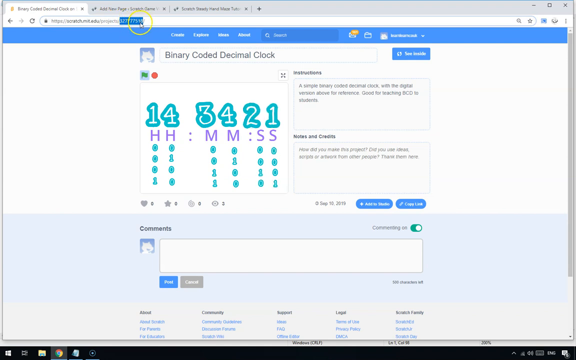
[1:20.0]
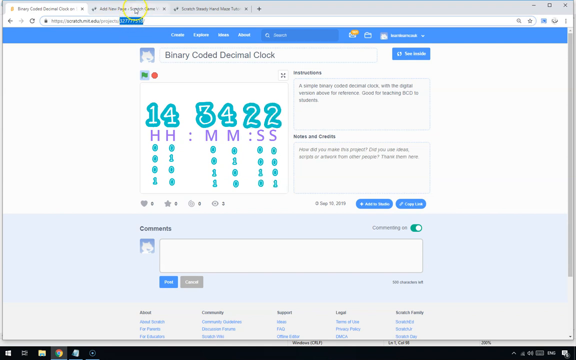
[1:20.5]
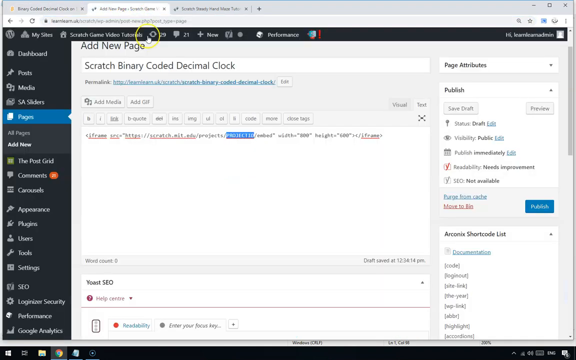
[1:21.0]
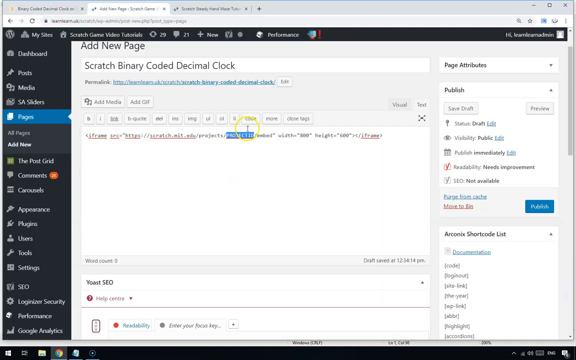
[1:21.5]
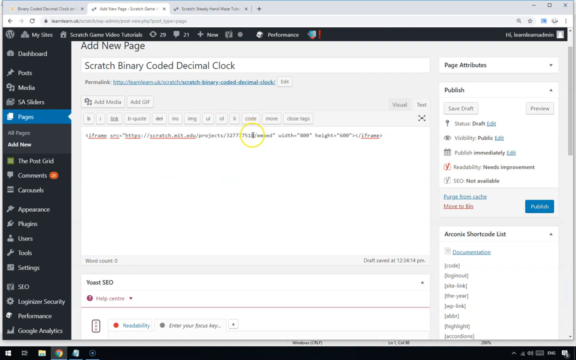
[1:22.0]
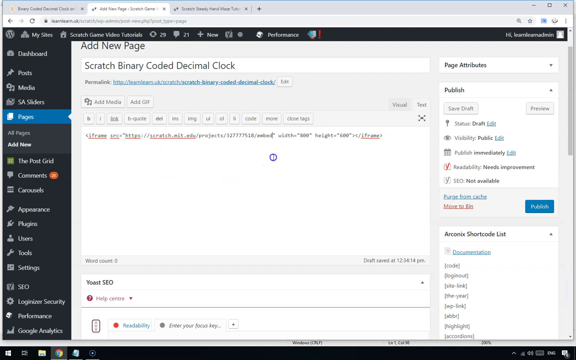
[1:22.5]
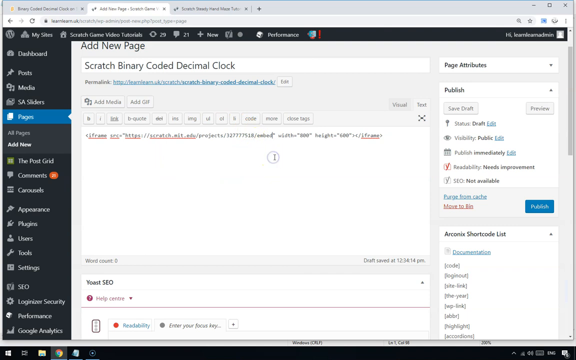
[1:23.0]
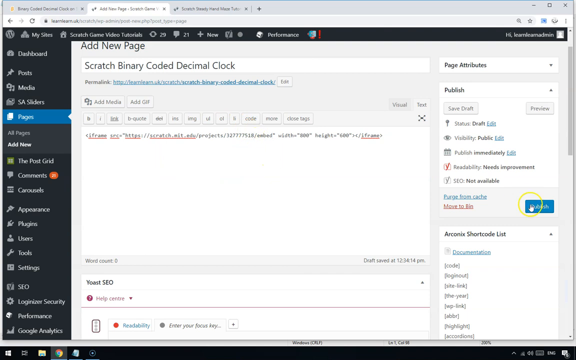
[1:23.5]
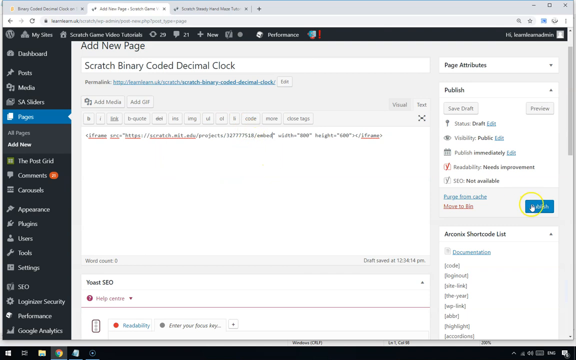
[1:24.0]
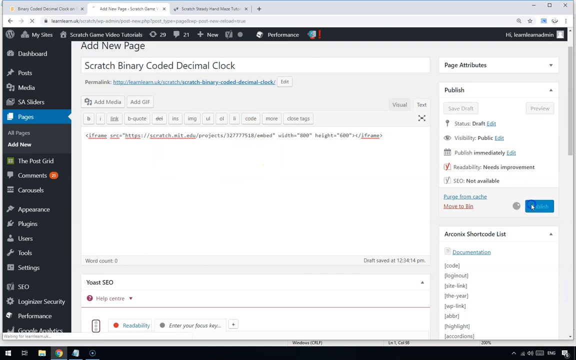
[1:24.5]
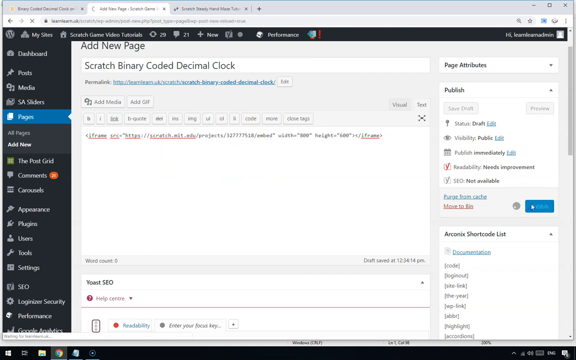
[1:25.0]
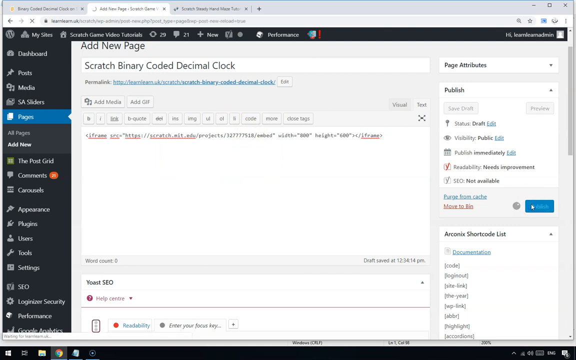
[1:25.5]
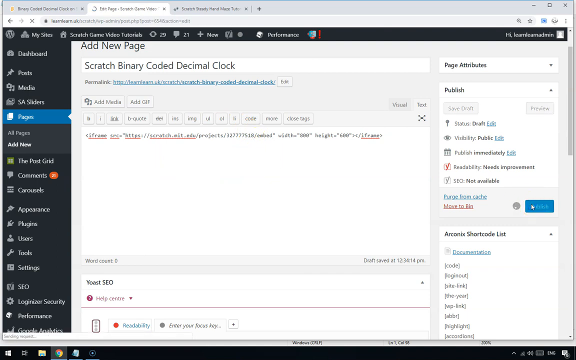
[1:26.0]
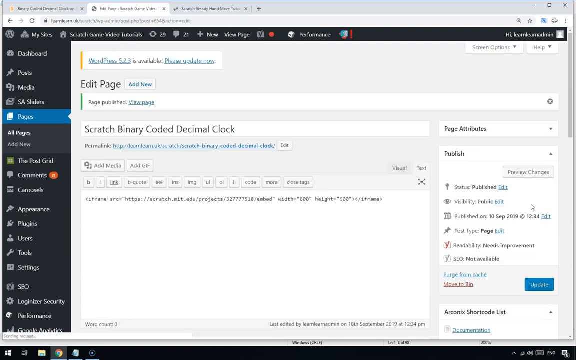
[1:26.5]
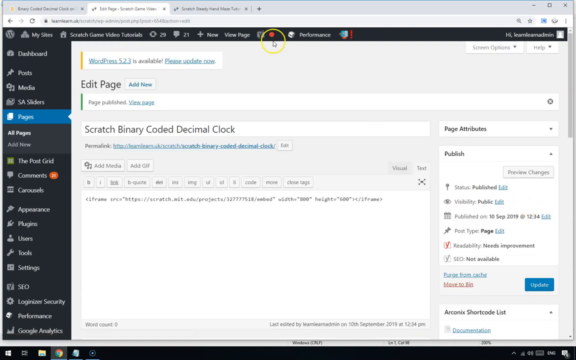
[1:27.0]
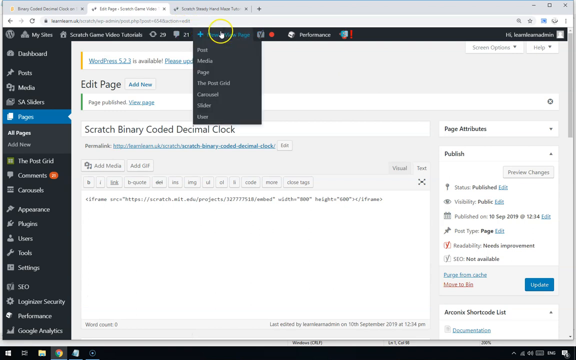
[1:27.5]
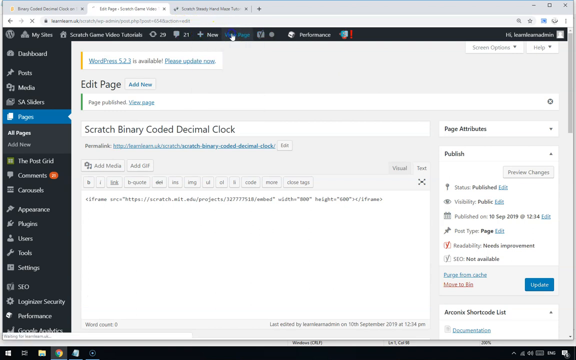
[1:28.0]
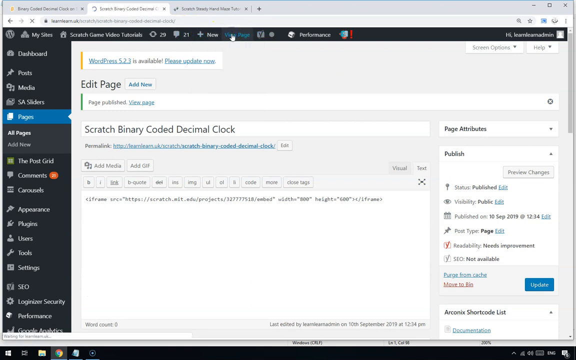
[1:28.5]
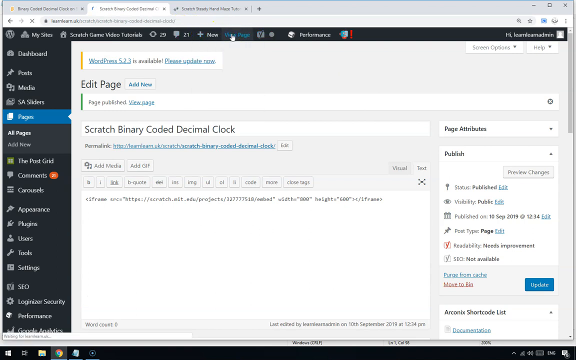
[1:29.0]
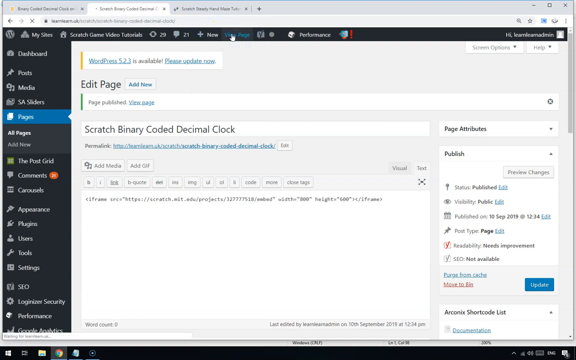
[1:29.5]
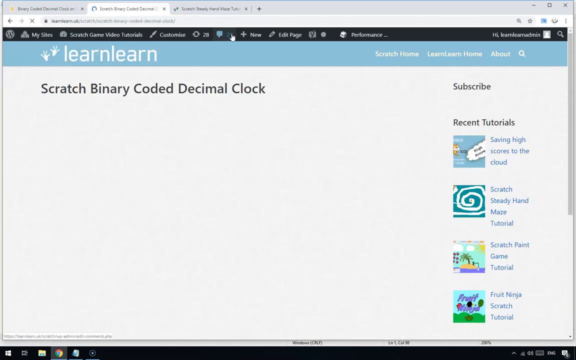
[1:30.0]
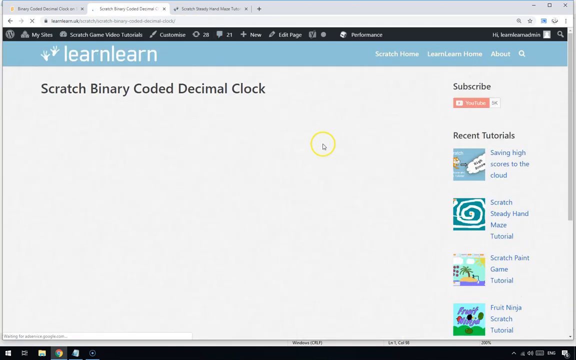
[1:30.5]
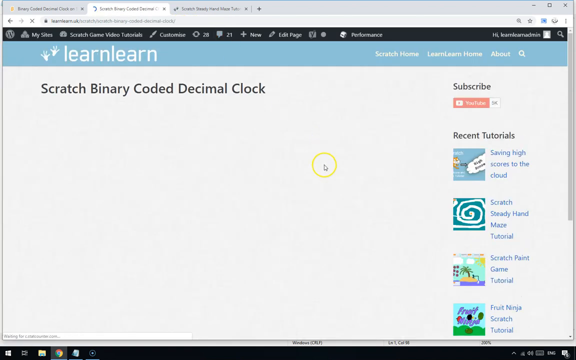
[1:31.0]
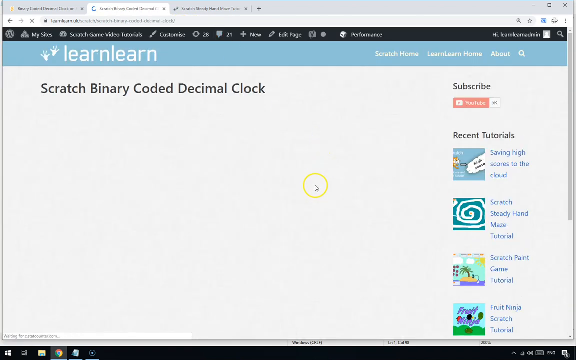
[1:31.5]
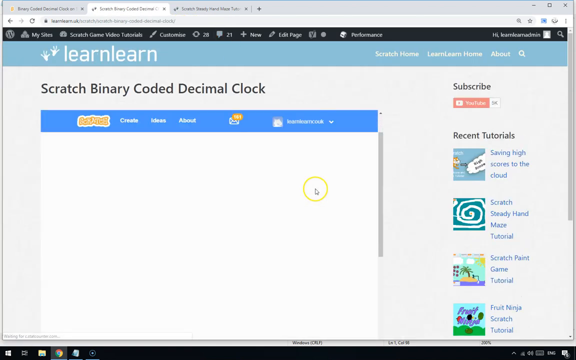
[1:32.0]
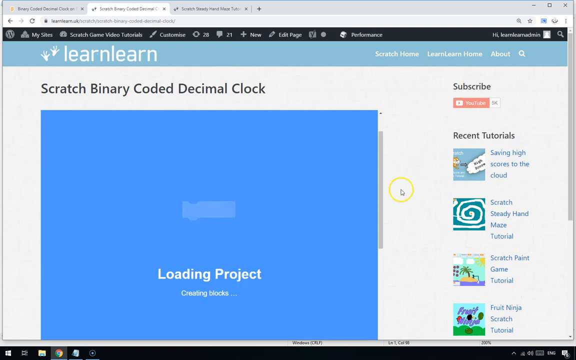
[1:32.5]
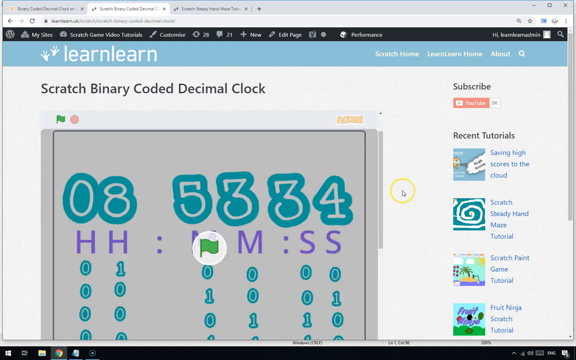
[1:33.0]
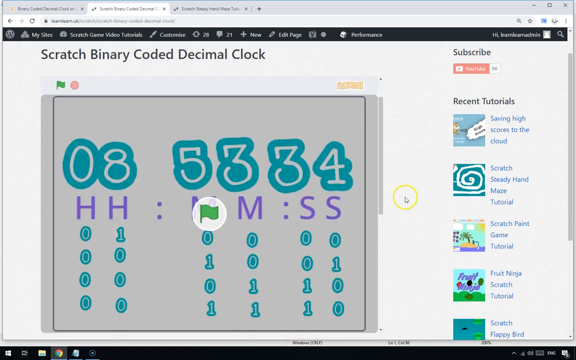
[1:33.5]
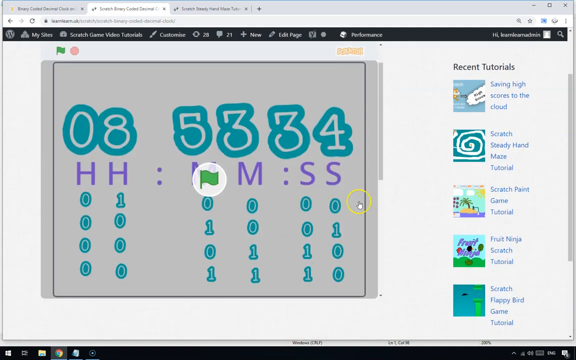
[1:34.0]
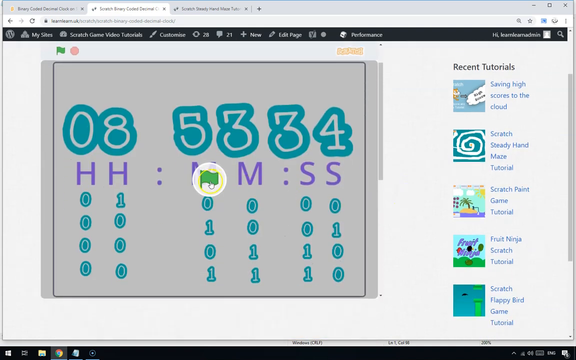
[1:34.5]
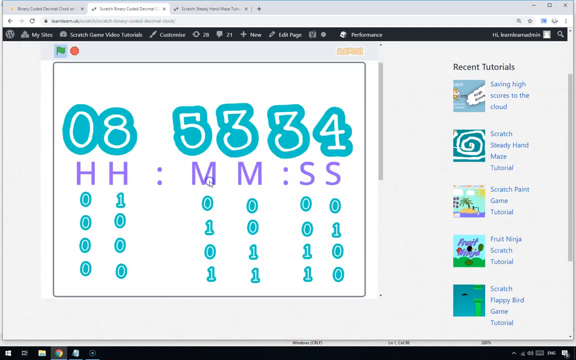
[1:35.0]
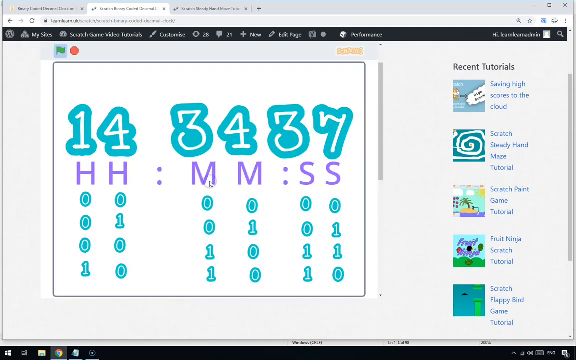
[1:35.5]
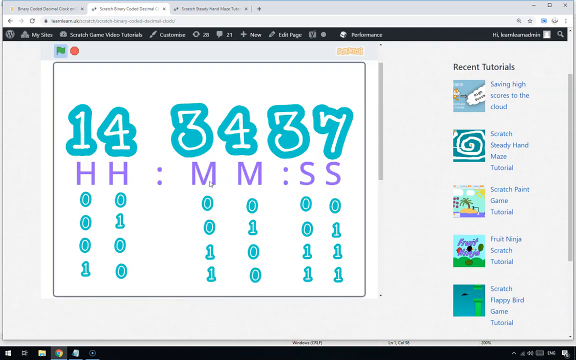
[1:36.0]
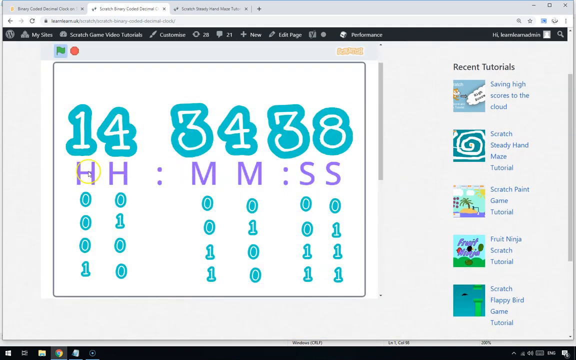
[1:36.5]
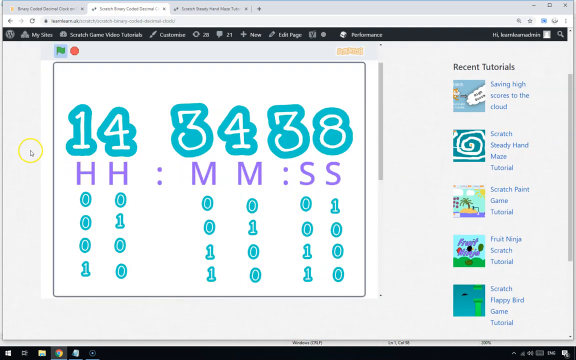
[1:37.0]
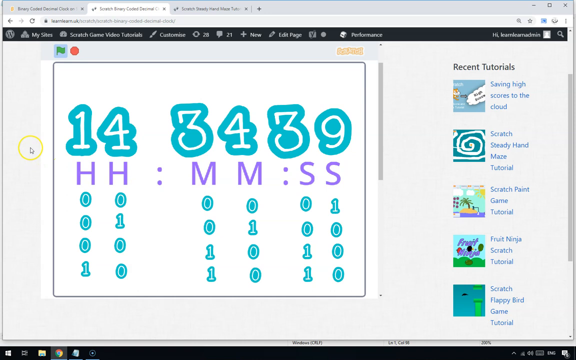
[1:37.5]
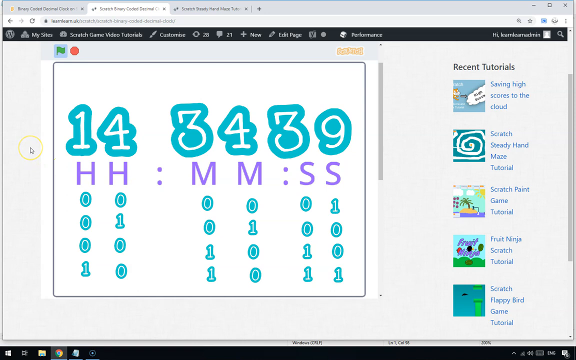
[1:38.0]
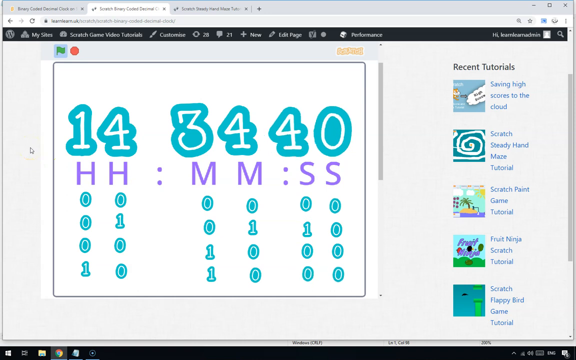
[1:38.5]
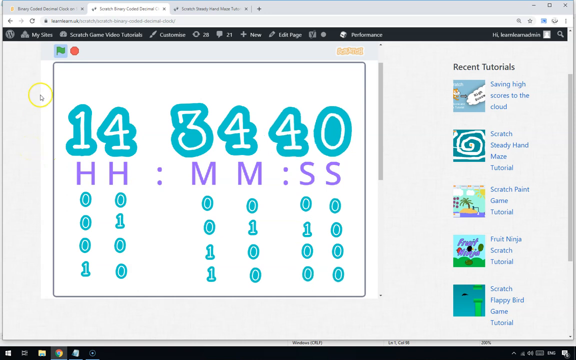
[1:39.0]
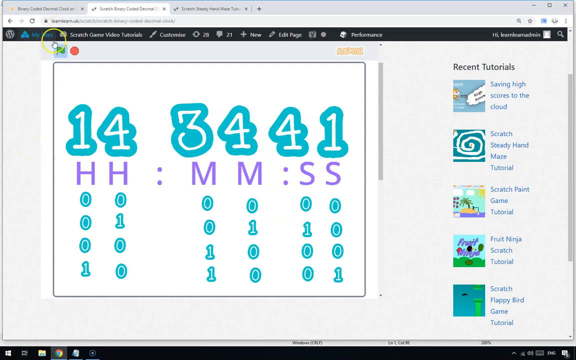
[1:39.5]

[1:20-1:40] The middle tab, for adding a new page, is clicked, and the cursor clicks within the file path or URL. After the word projects, the series of numbers is pasted in, so 3, 2, 7, 7, 7, 7, 5, 1, 8 now sits between slashes, between projects and embed. Update is clicked in the blue tab on the right side, then View Page at the very top. A page appears that says "learn, learn, learn, scratch binary coded decimal clock", initially blank. The cursor moves down and the page loads, displaying the clock with the hour, minute and seconds updating in real time. A green flag appears in the center and is clicked; the green flag is highlighted in blue above it. The cursor moves over the image and then goes to the very top of the page.